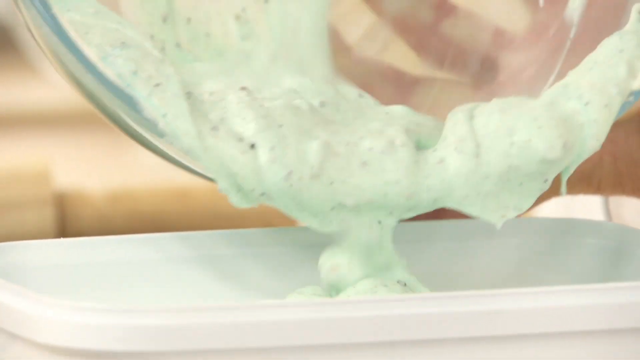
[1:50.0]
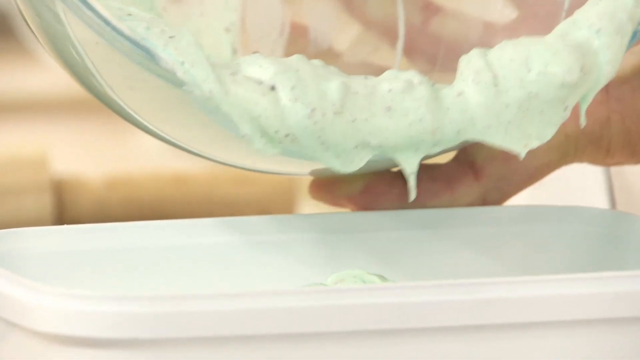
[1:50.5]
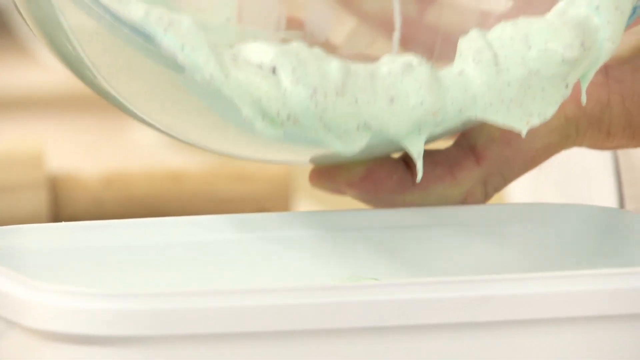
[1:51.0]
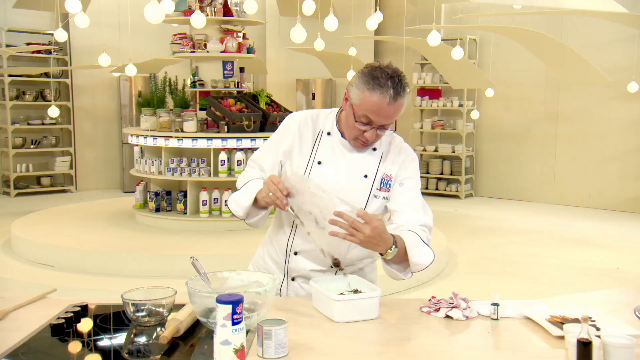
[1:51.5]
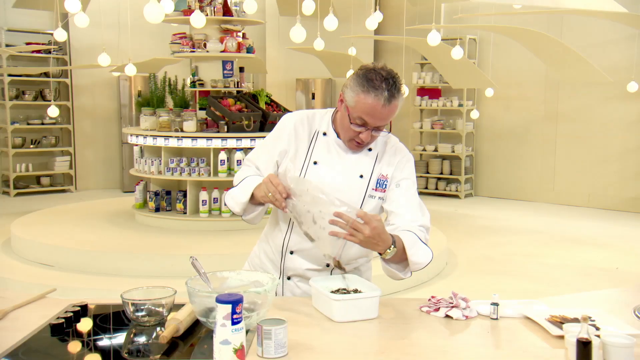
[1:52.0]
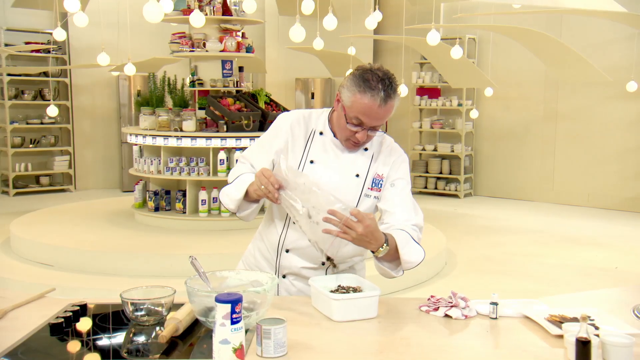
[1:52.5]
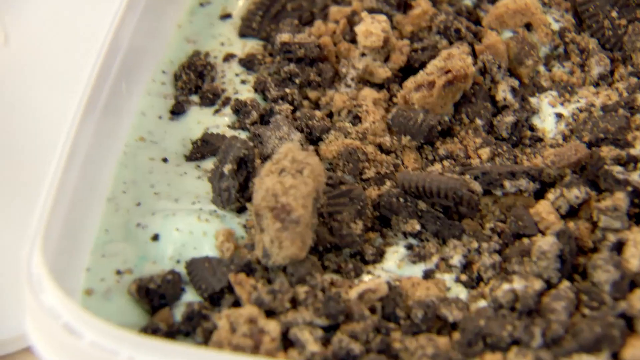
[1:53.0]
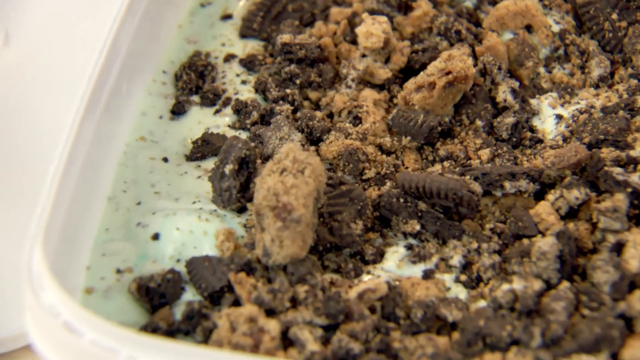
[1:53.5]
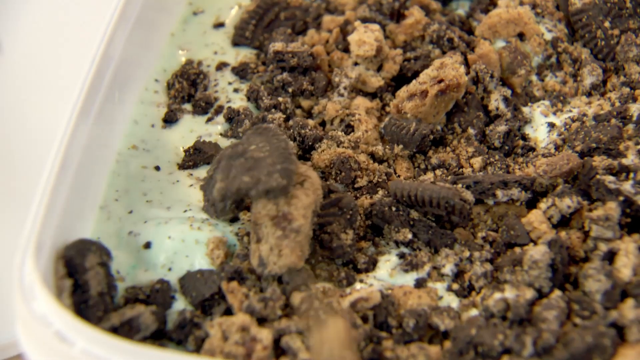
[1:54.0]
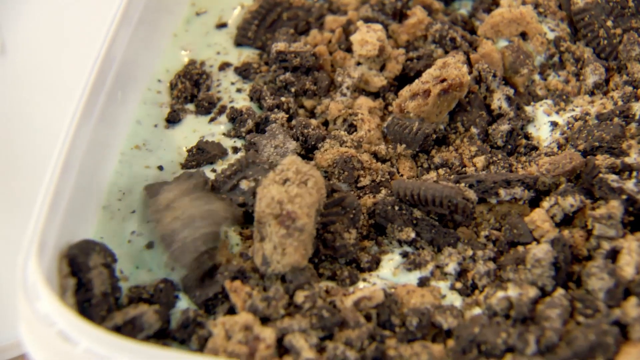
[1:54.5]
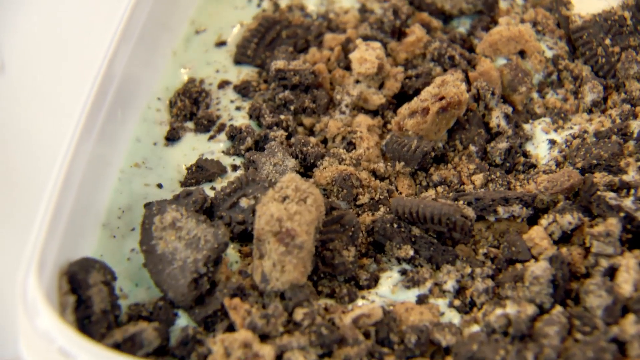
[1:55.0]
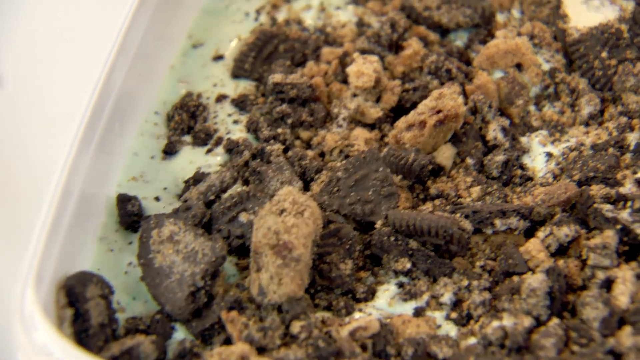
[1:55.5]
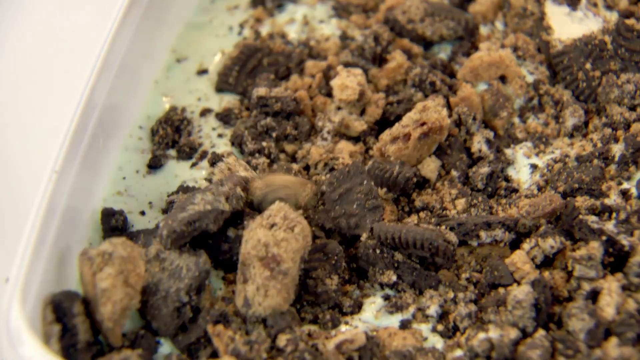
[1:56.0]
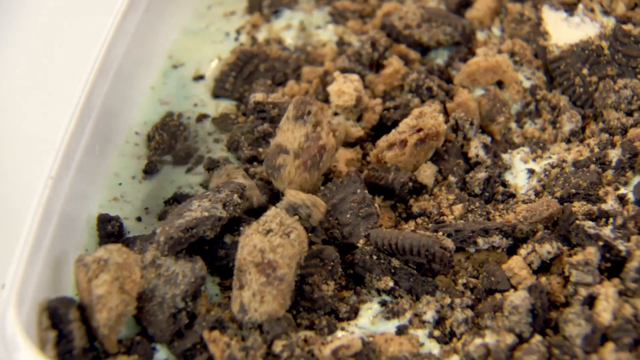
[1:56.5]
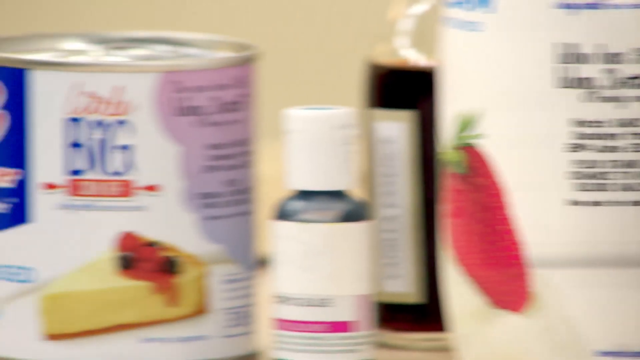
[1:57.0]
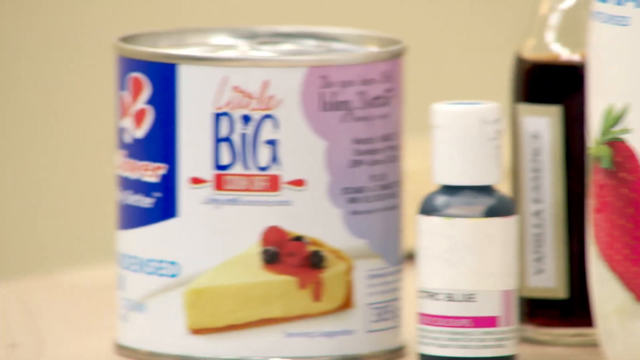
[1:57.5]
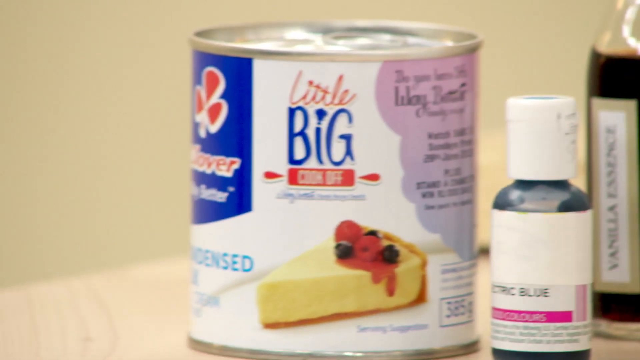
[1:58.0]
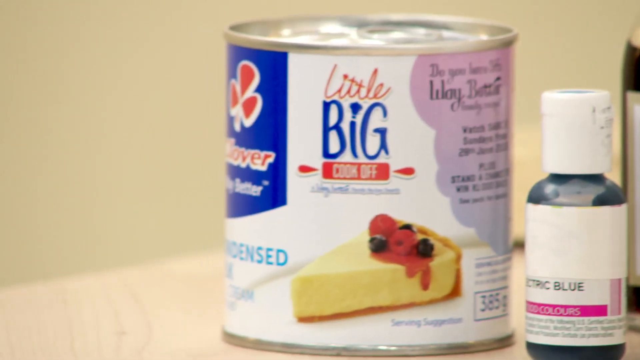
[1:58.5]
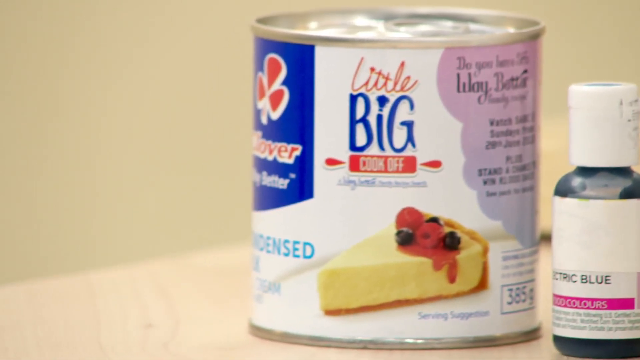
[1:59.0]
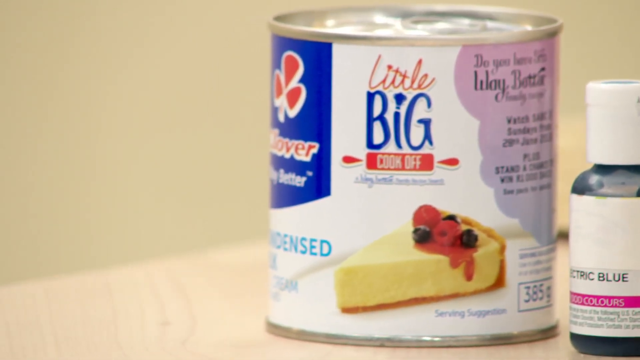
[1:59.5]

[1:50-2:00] In a close-up, the green cream is emptied from the clear bowl into the white container on the counter. The camera zooms out to the chef as he empties more cookie pieces from the clear plastic bag over the cream he has just poured into the container. After a close-up of the cookie chunks, the camera pans to a tin can of condensed milk with a picture of a small piece of cheesecake with berries on it. The little big cook-off logo is on the can, which is from the brand Clover and has not yet been opened.